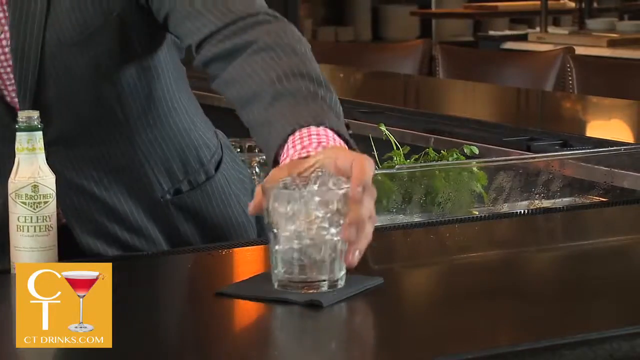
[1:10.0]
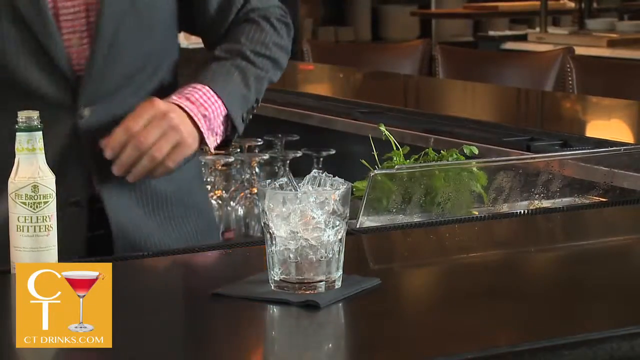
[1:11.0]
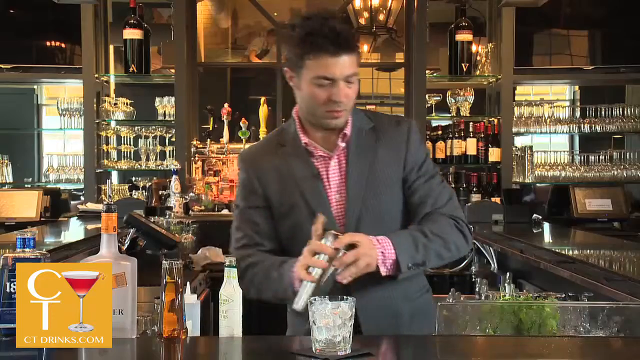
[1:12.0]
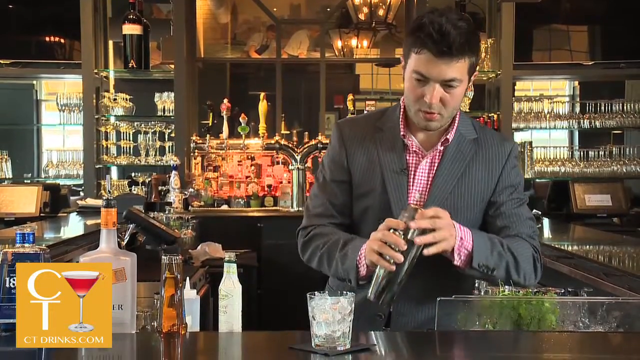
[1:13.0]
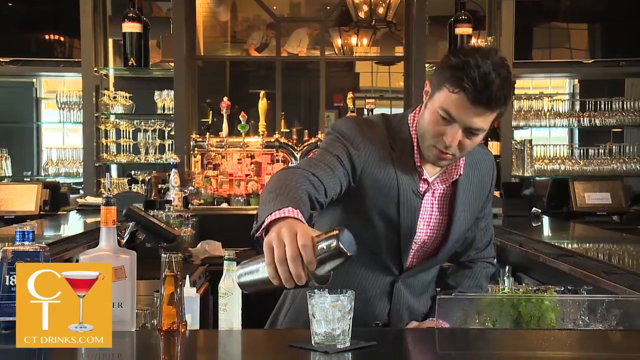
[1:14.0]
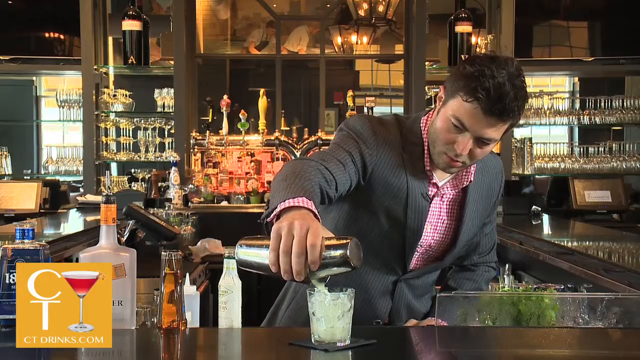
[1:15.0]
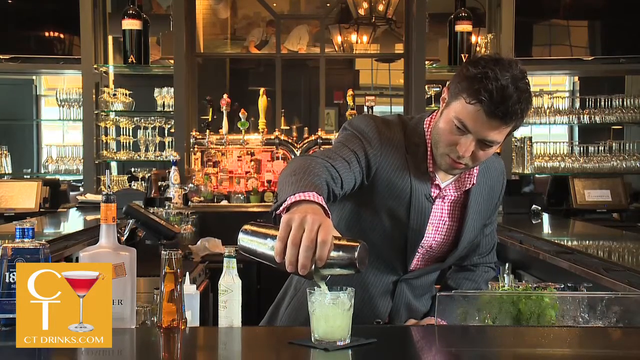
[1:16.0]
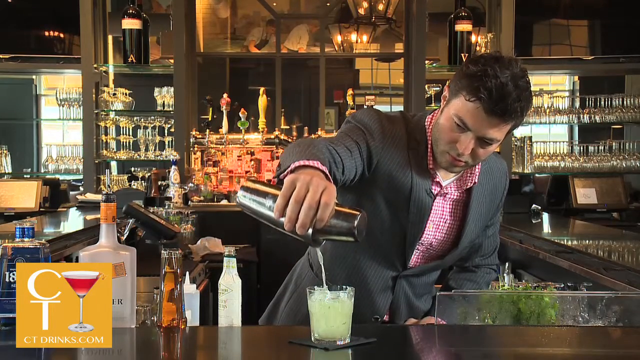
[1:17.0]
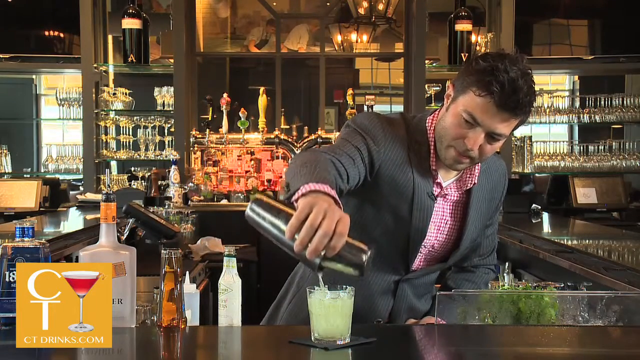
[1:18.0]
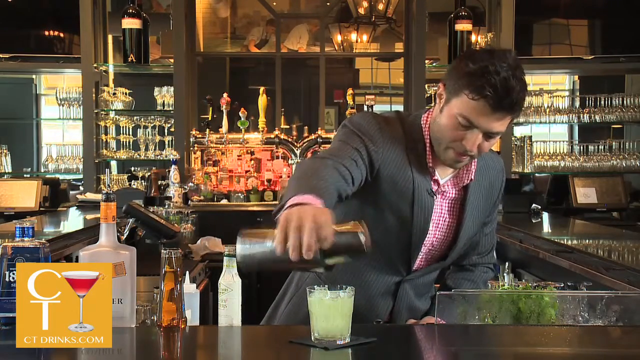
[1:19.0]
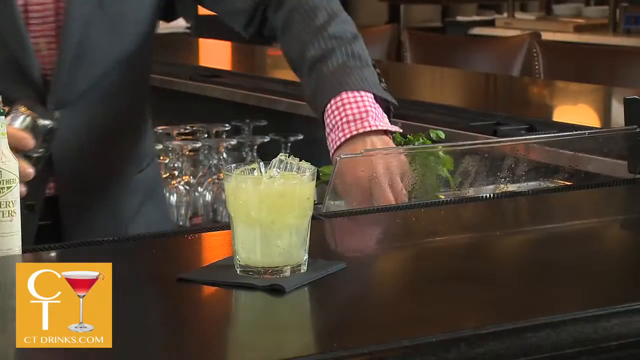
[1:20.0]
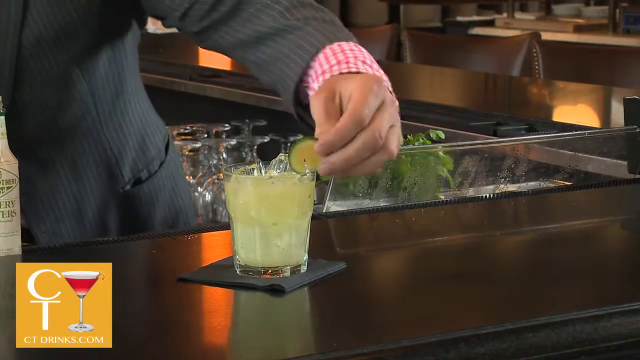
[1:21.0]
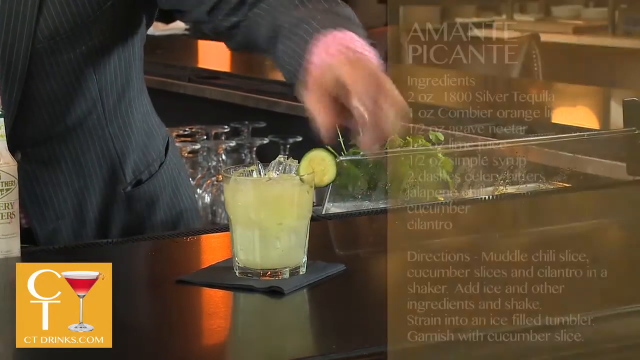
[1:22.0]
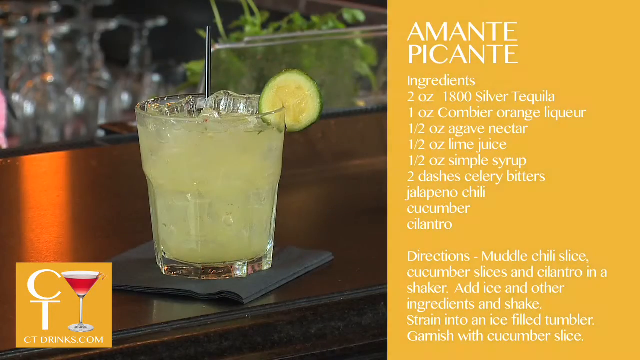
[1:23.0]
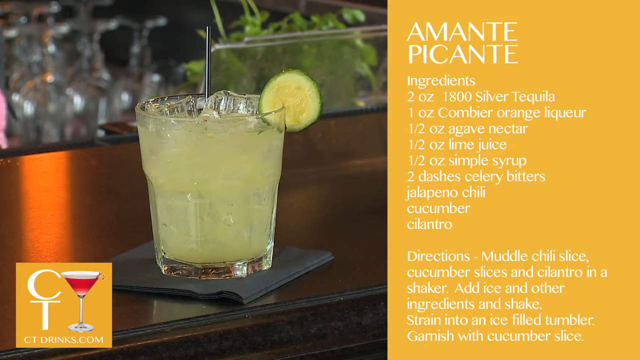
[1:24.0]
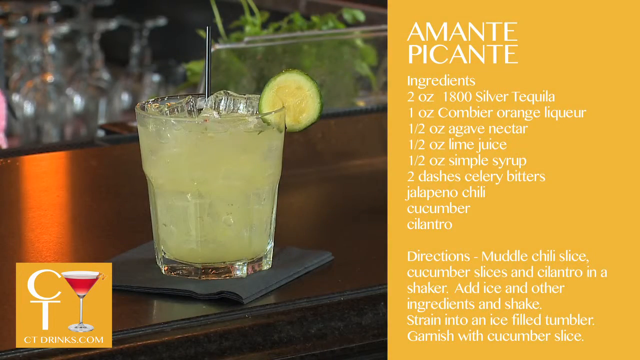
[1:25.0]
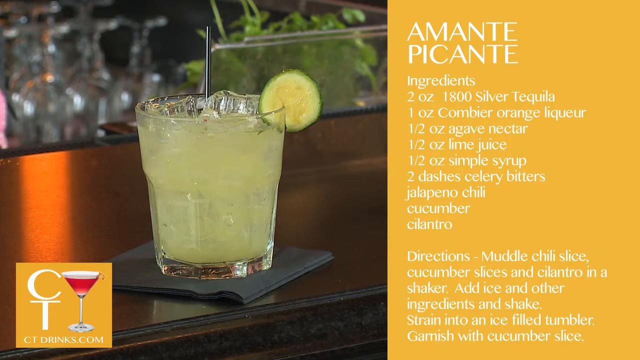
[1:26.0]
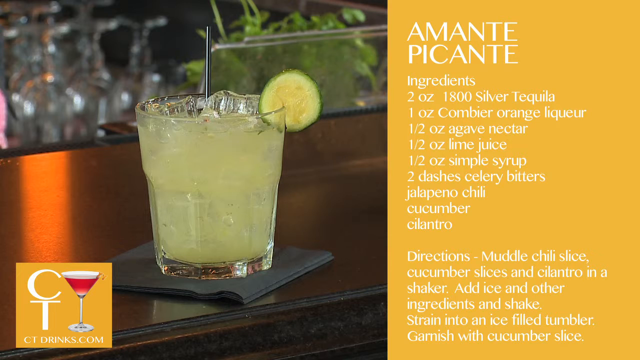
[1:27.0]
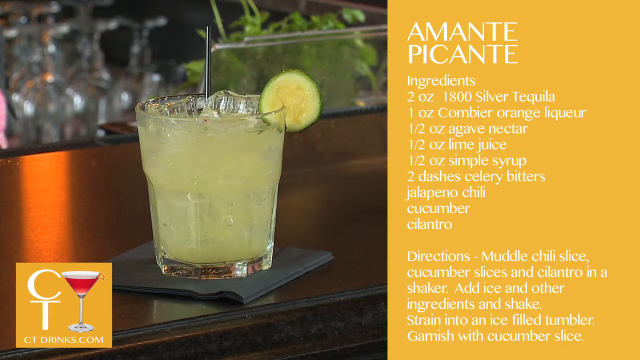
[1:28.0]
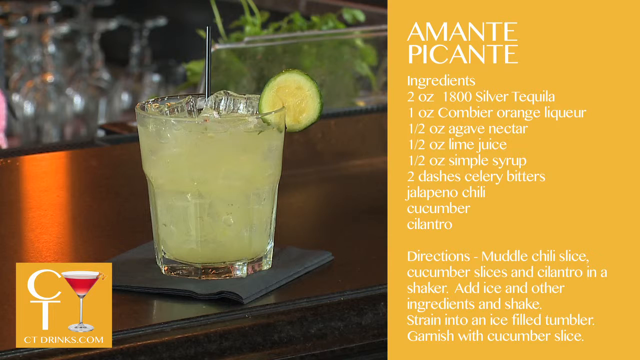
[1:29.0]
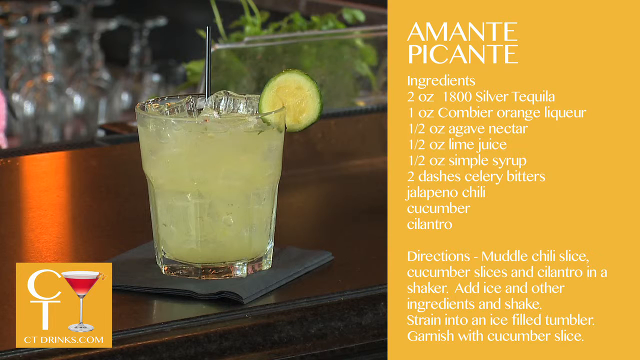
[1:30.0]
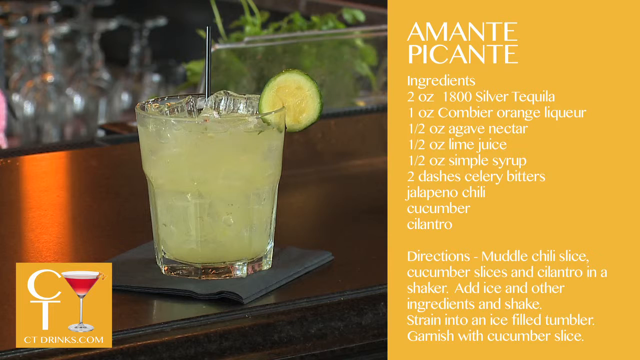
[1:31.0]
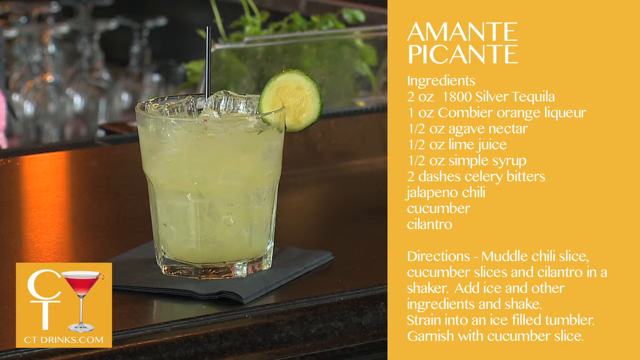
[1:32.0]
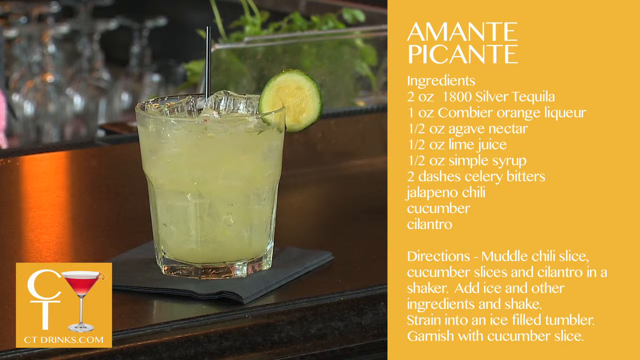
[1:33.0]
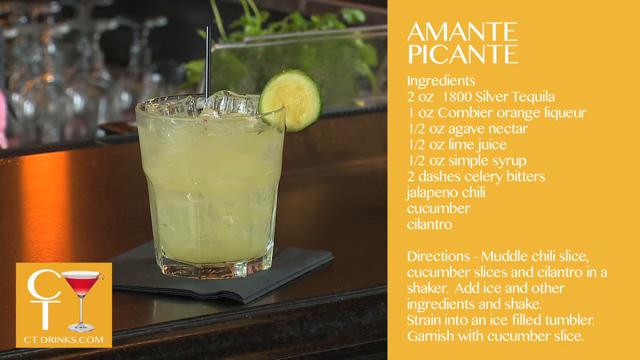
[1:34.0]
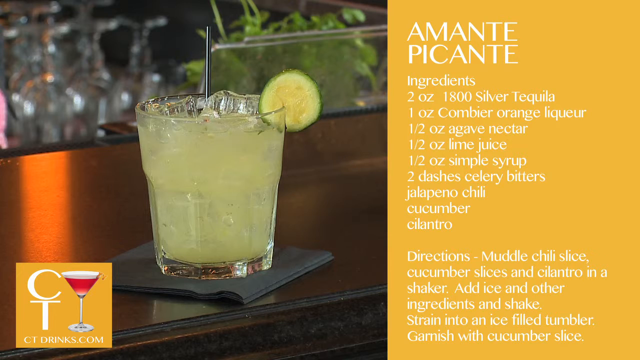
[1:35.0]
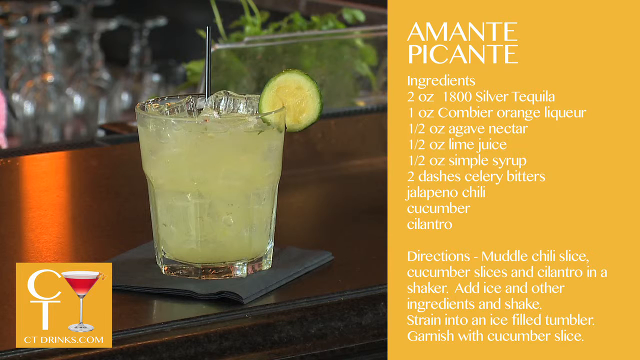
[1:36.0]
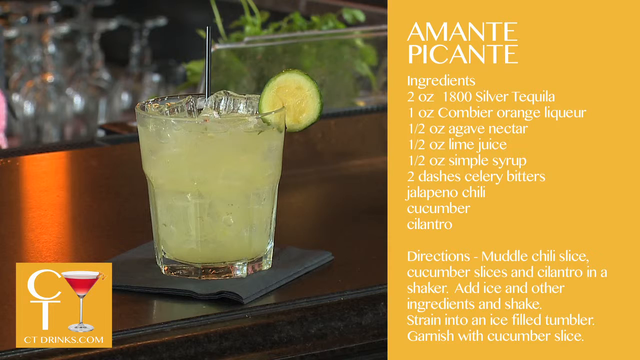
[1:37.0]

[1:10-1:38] A man finishes mixing a drink. He puts a glass filled with ice on a black napkin on a bar counter, then takes the metal shaker he prepared the drink in and pours the drink over the ice. The drink is pale green. He then takes a slice of cucumber and sticks it on the side of the glass. As he does this, the screen shifts to a close-up of the glass, and next to it an orange backdrop lists the title of the drink and the ingredients and directions for making it. The drink is called Amante Picante, and the ingredients include silver tequila, orange liqueur, agave nectar, lime juice, simple syrup, celery bitters, jalapeno chili, cucumber, and cilantro. On the lower left side of the screen is a logo that says CT with a graphic of a drink in a glass, and below it "CT Drinks.com".